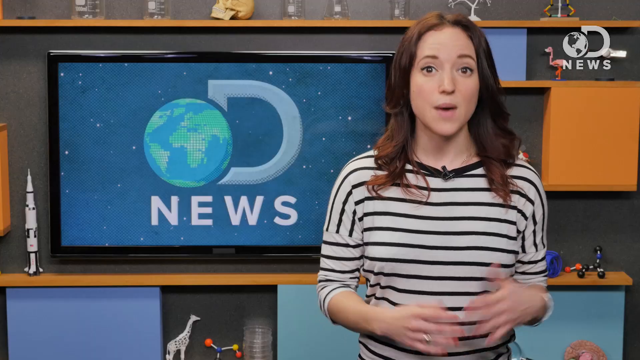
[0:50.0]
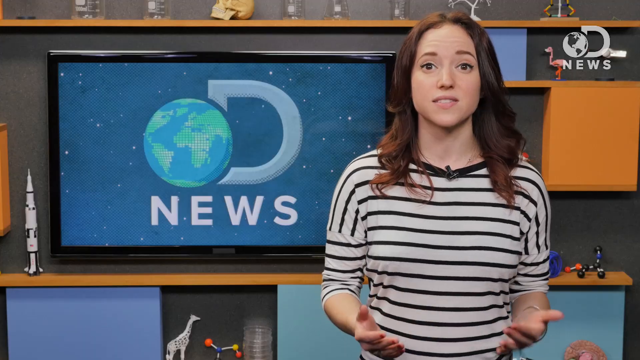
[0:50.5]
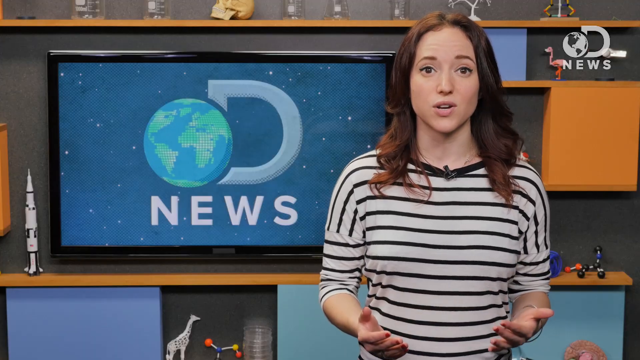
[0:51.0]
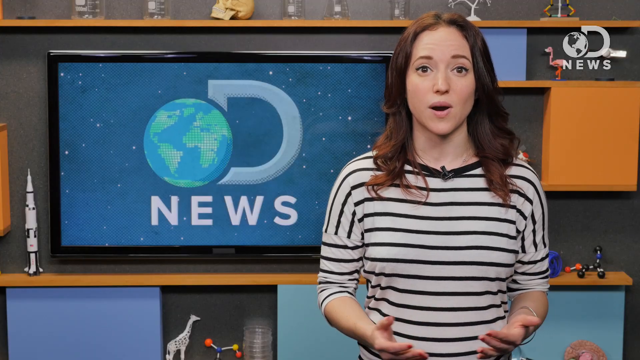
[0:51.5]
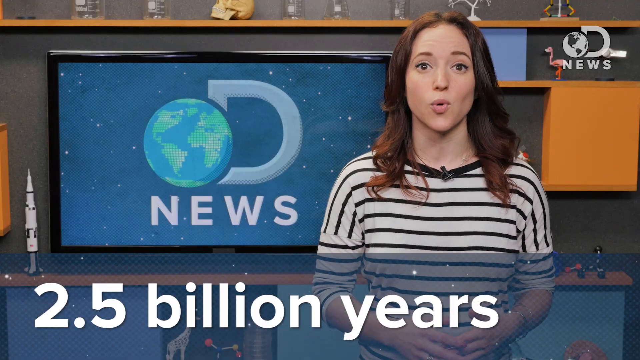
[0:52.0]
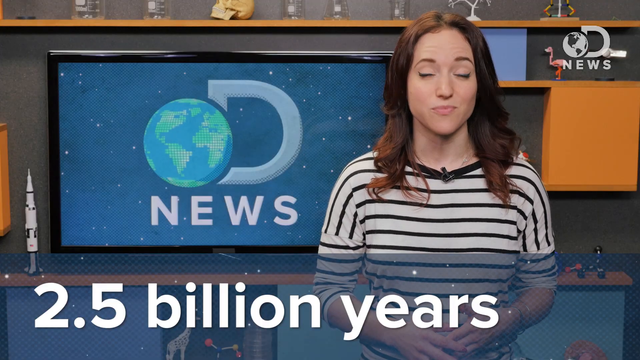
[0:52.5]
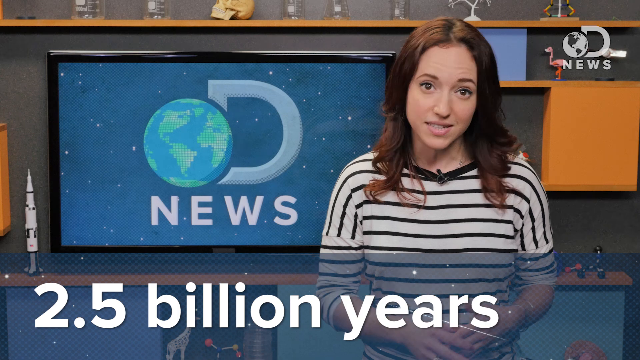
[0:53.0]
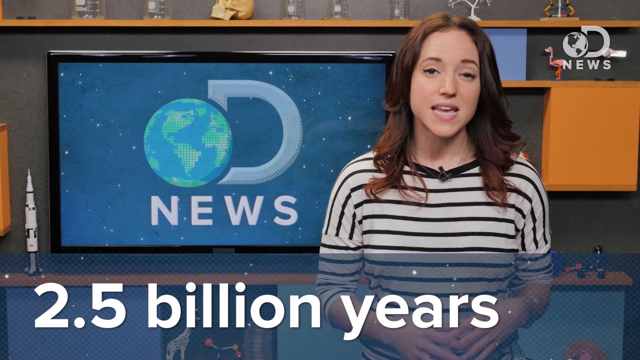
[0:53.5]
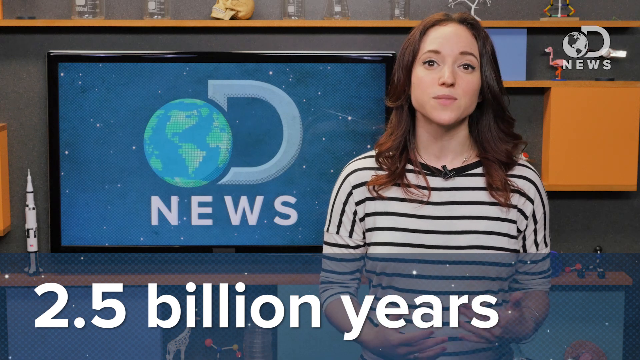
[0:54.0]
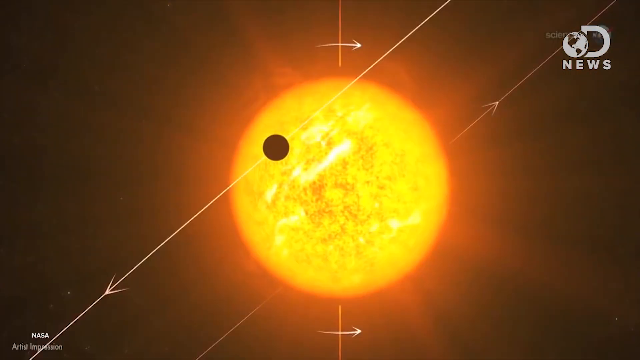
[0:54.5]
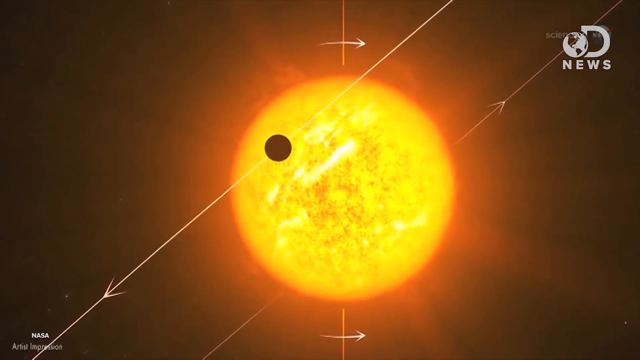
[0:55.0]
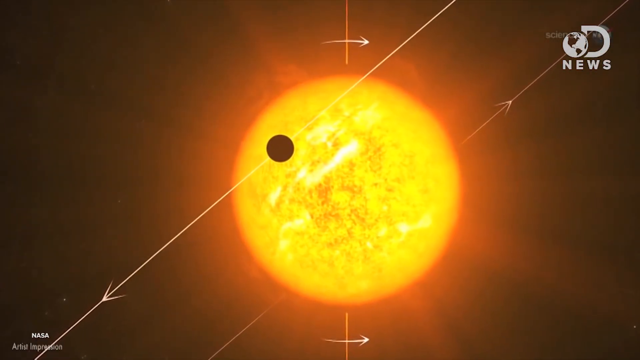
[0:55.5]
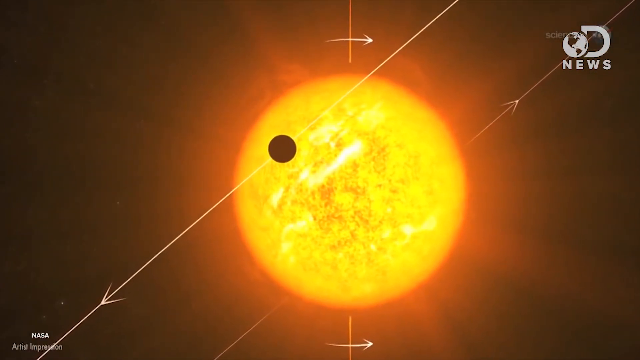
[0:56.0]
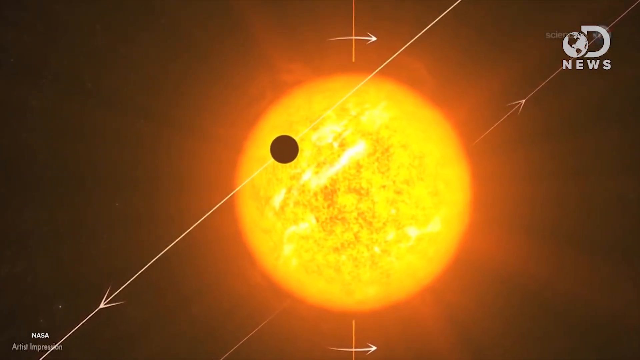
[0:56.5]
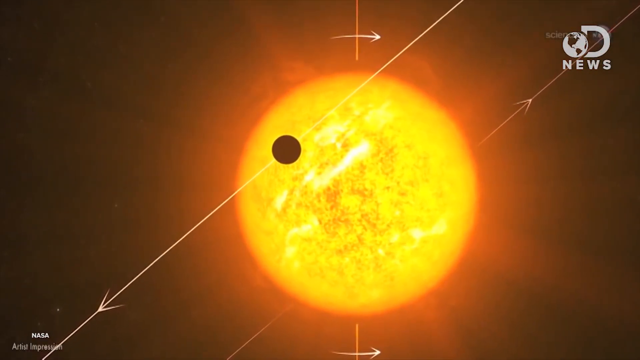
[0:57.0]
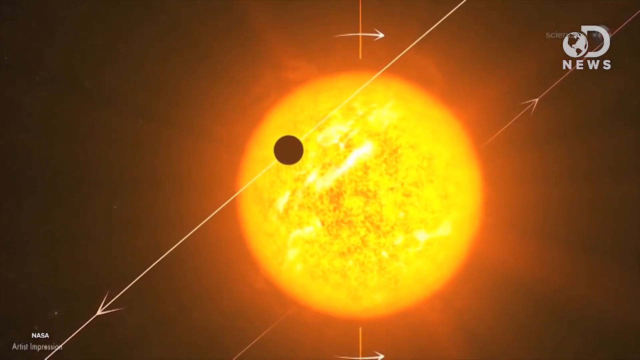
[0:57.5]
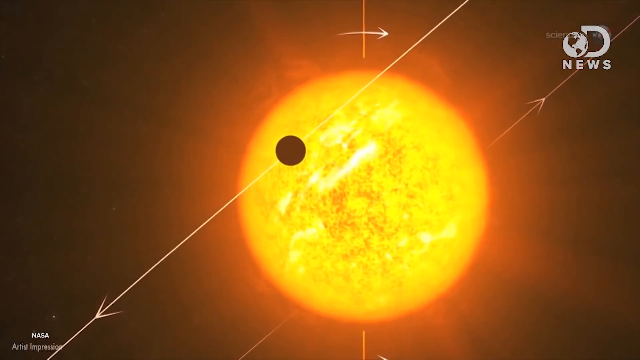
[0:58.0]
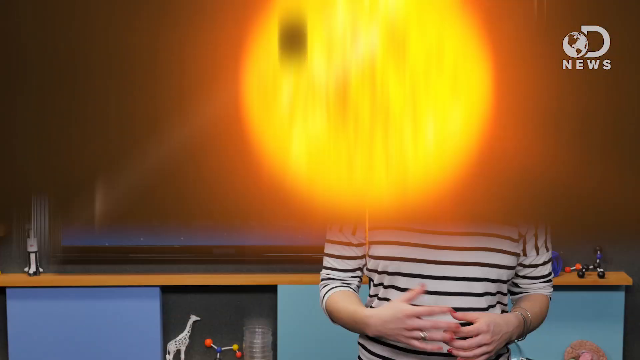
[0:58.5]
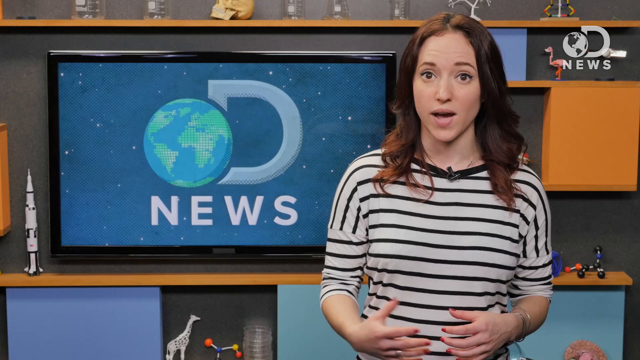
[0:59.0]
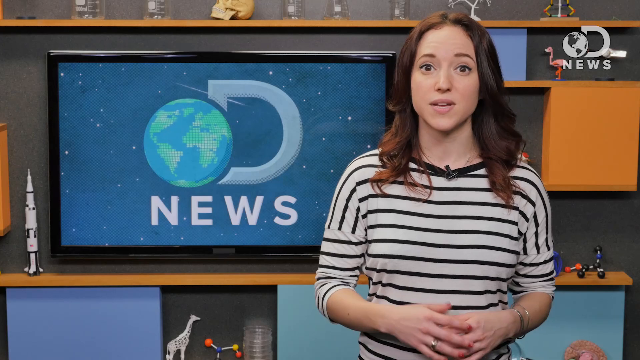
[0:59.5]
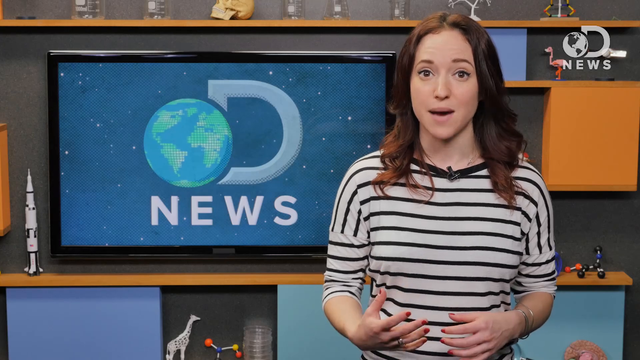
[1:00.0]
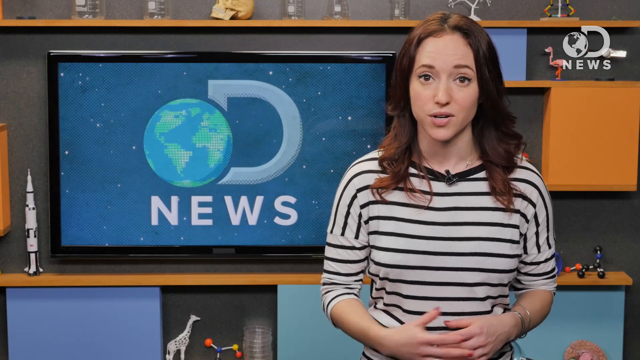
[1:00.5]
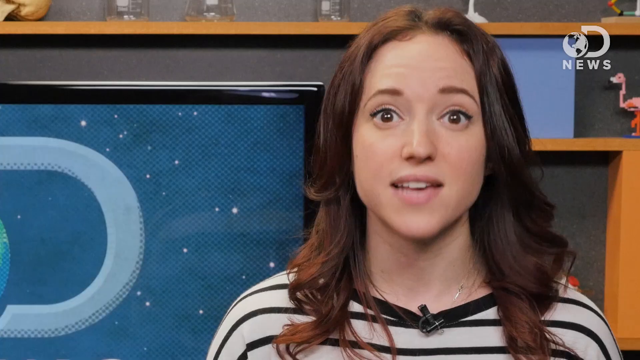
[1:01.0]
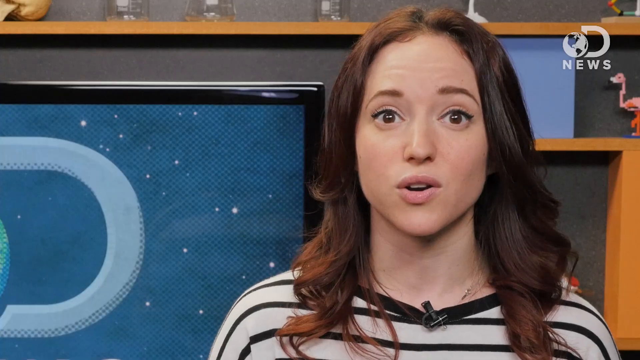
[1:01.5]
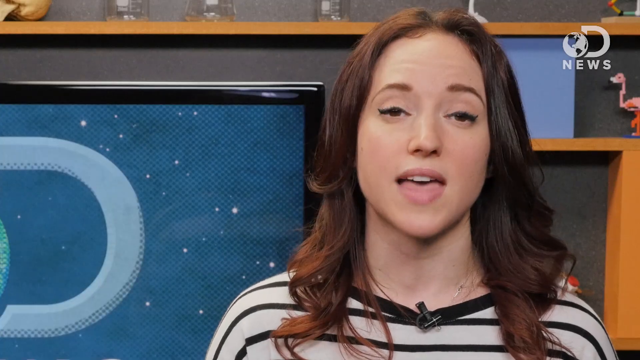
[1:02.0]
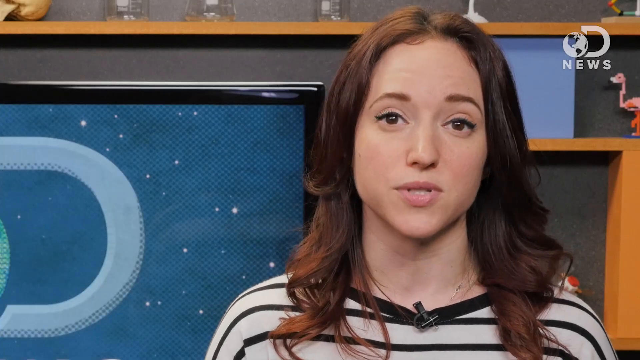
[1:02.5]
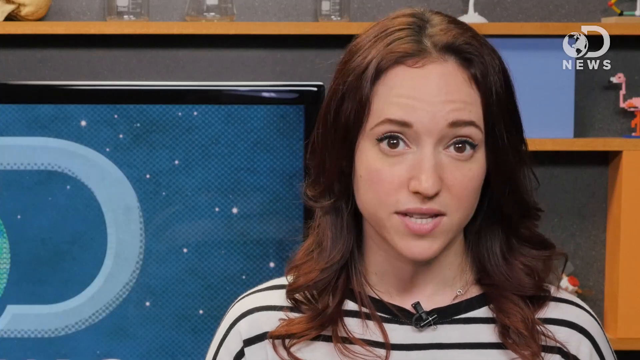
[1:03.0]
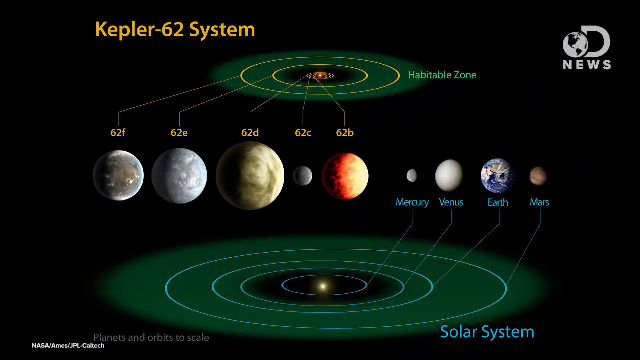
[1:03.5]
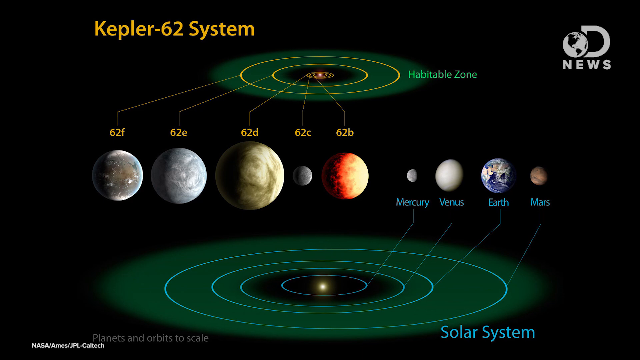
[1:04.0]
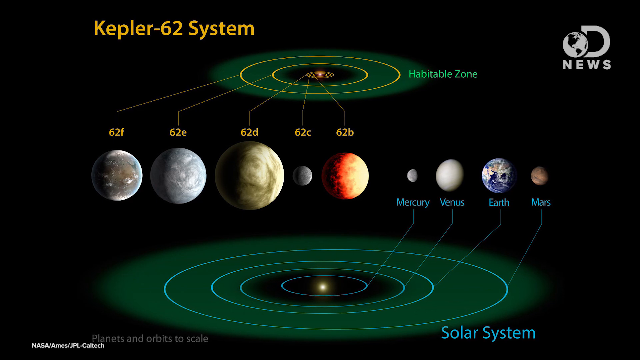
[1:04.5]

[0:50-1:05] The presenter is in the news studio with the unchanged background: a large television screen with the DNews logo, surrounded by bookcases holding various objects. As she speaks, the words "2.5 billion years" appear from the left-hand side. The scene switches to an artist's drawing of a sun, not identified as belonging to our solar system or another, depicted as a large yellow ball with a smaller black planet orbiting it and lines indicating the direction of the orbit. In the lower left corner of the image it says "NASA artist impression," with "subscribe" in the lower right corner and "DNews" in the upper right corner. The view switches back to the presenter in the studio; at first the camera is far away from her, then it zooms in for a close-up as she continues to speak. Finally, a diagram labeled "Kepler-62 System" shows five planets from that system and their relative size compared to an illustration of our solar system, with Mercury, Venus, Earth, and Mars depicted next to the Kepler-62 planets.